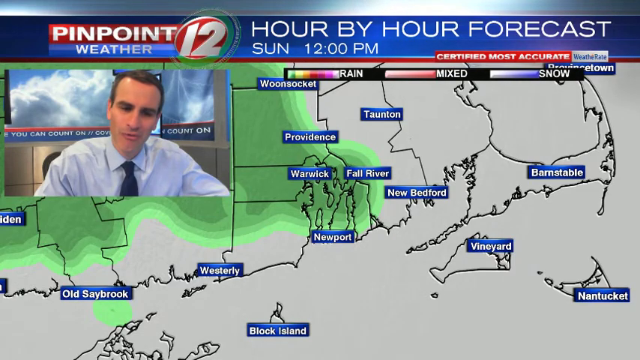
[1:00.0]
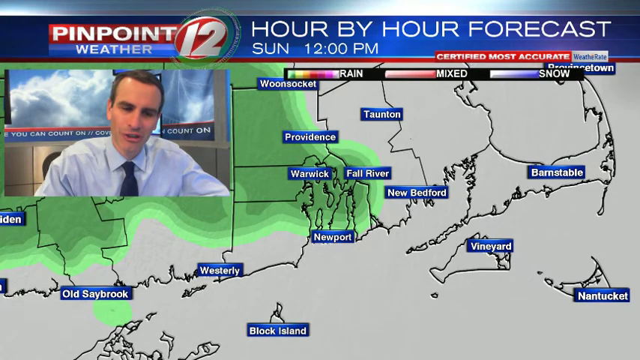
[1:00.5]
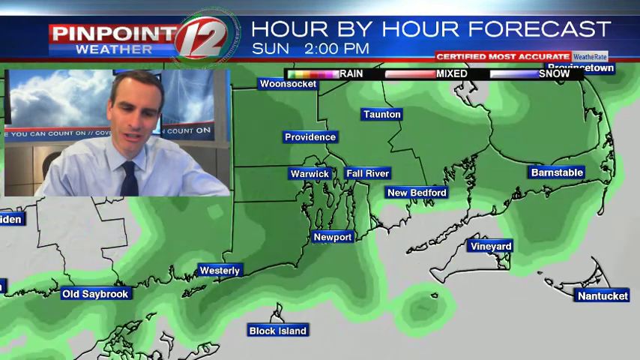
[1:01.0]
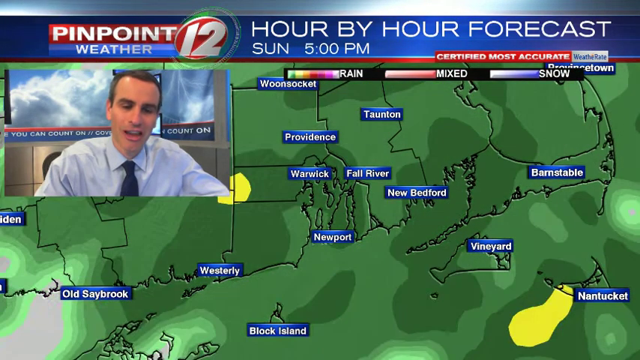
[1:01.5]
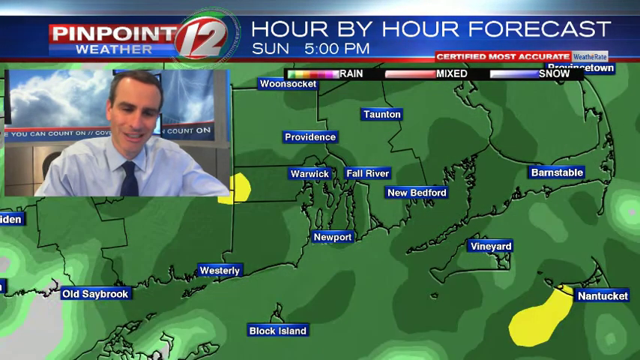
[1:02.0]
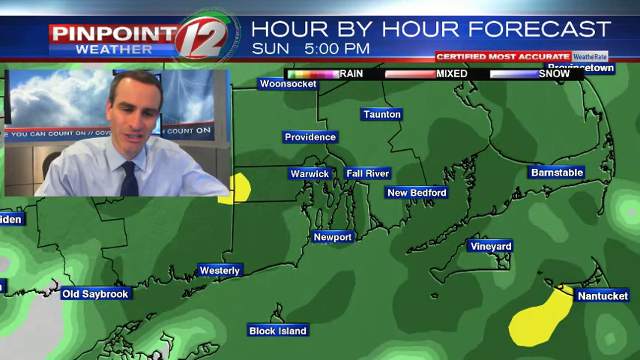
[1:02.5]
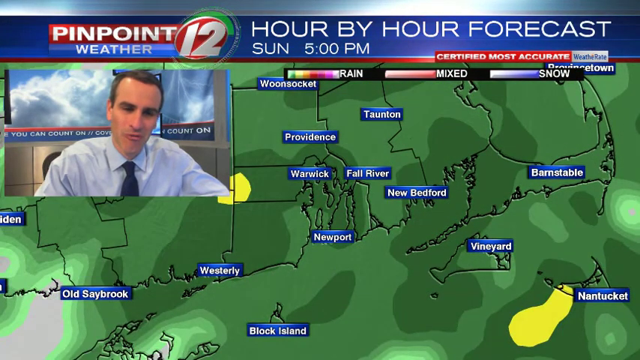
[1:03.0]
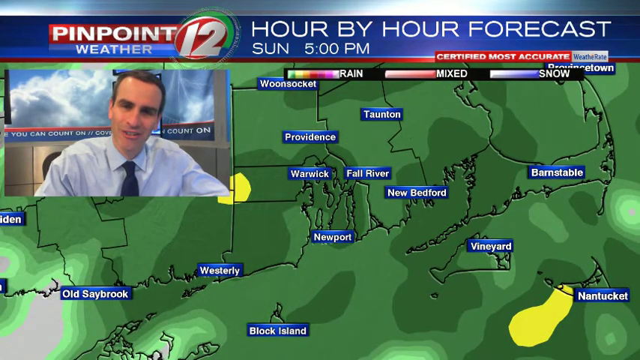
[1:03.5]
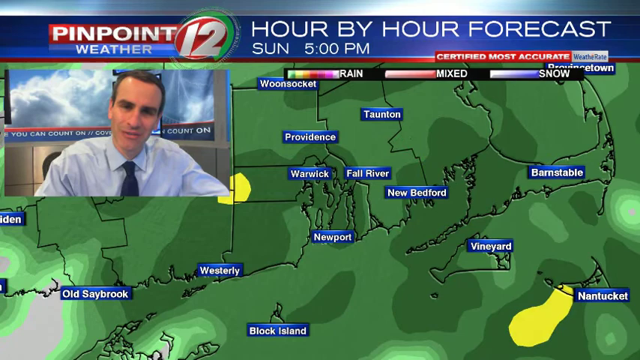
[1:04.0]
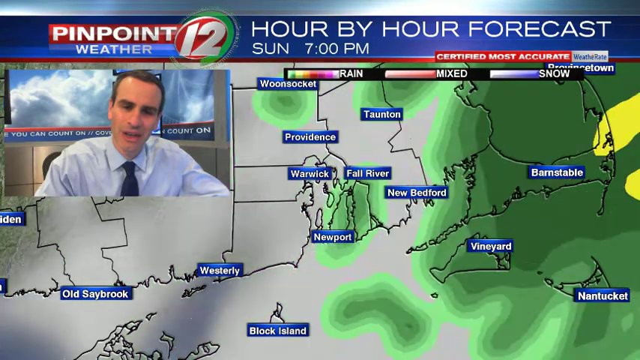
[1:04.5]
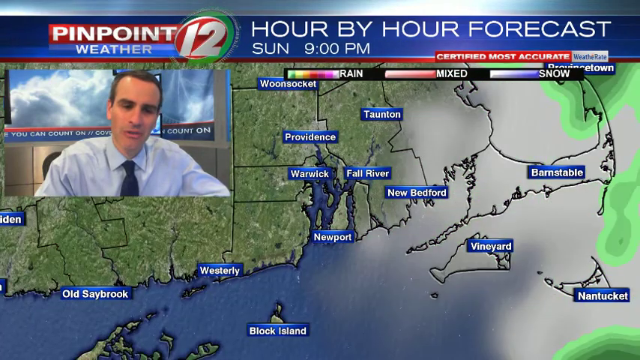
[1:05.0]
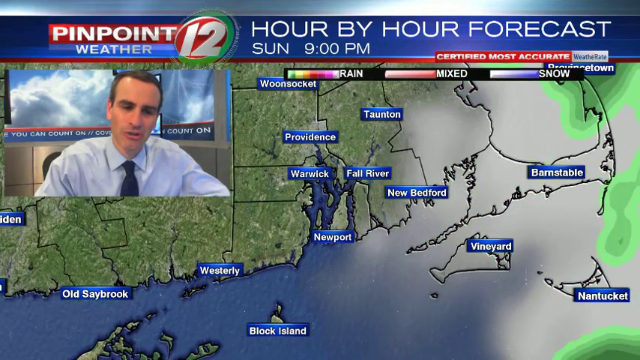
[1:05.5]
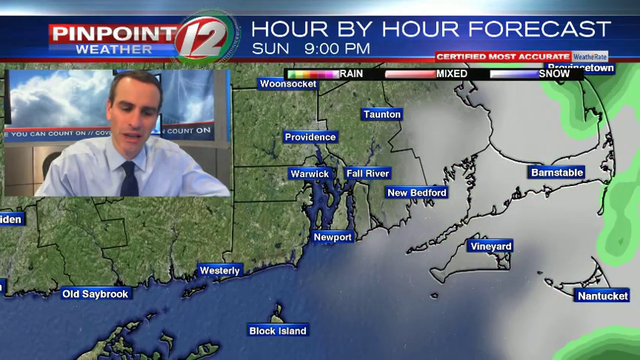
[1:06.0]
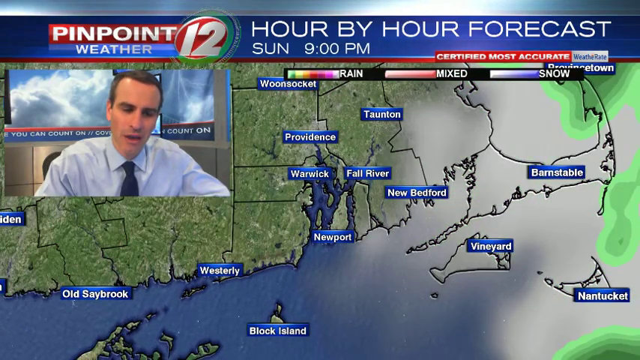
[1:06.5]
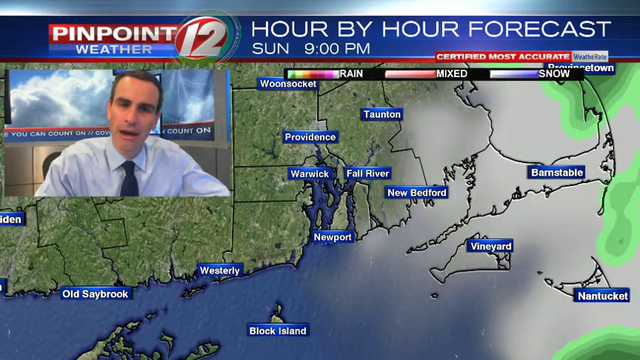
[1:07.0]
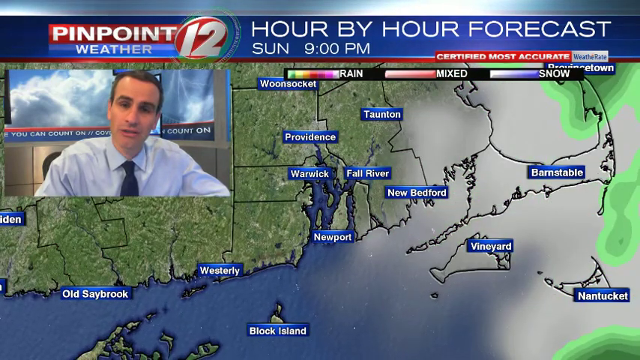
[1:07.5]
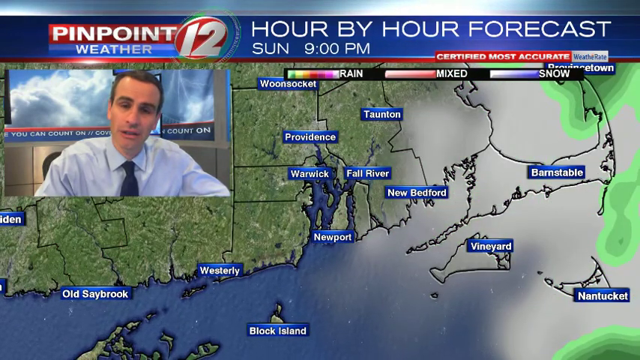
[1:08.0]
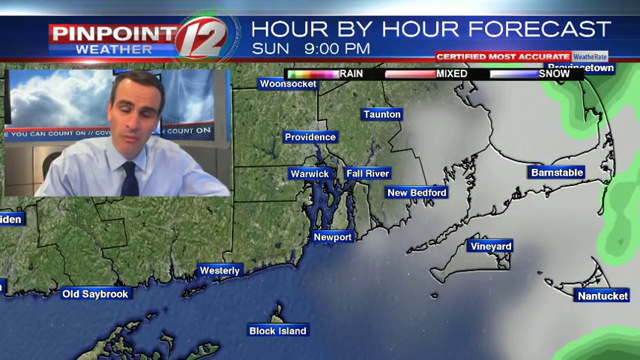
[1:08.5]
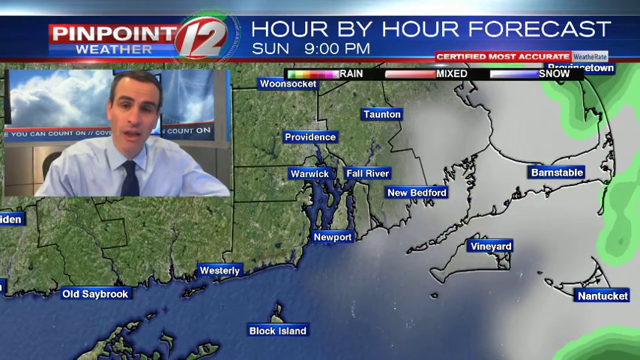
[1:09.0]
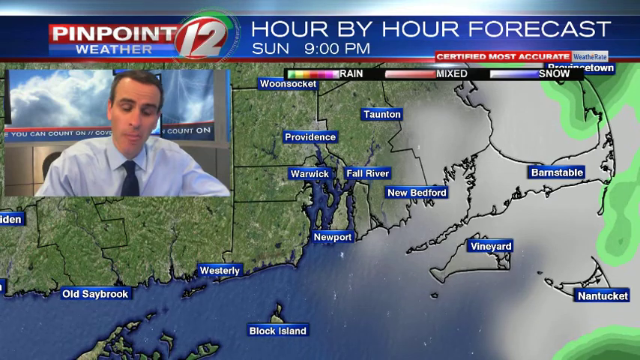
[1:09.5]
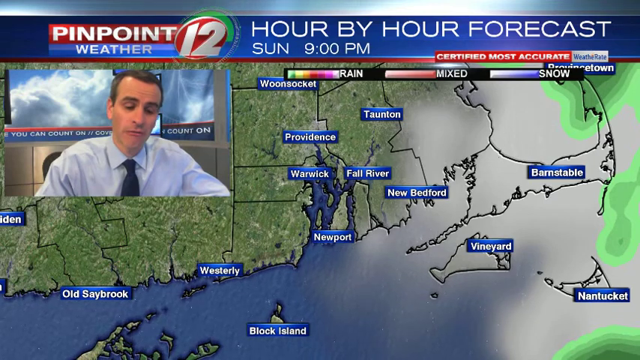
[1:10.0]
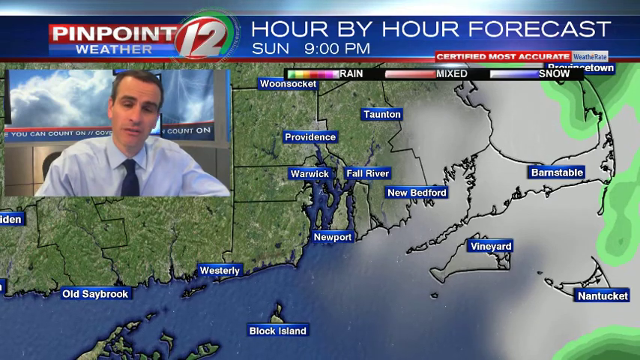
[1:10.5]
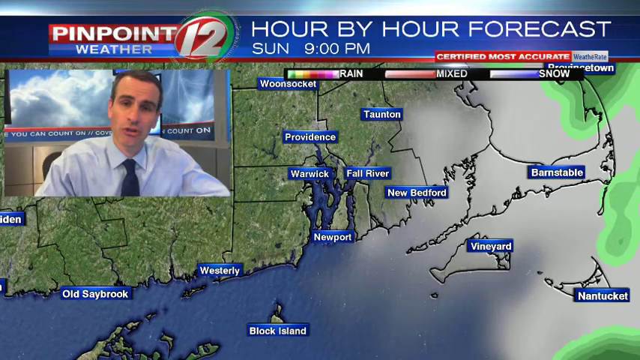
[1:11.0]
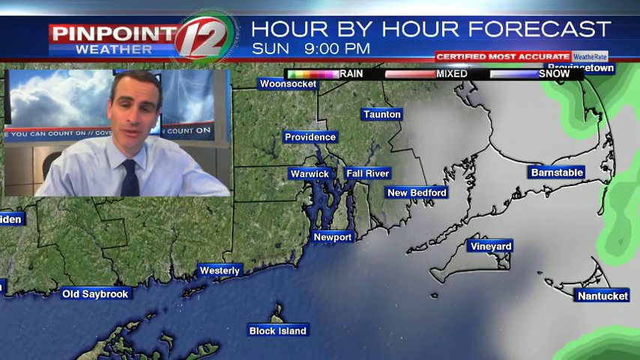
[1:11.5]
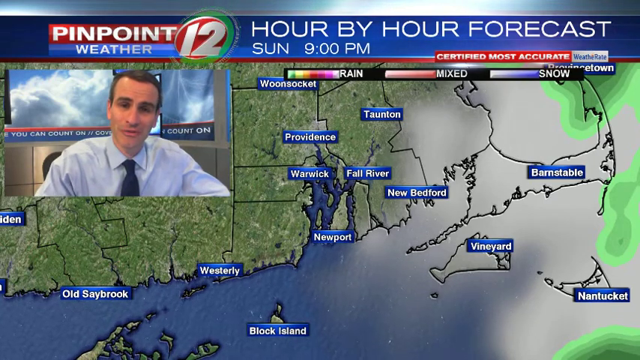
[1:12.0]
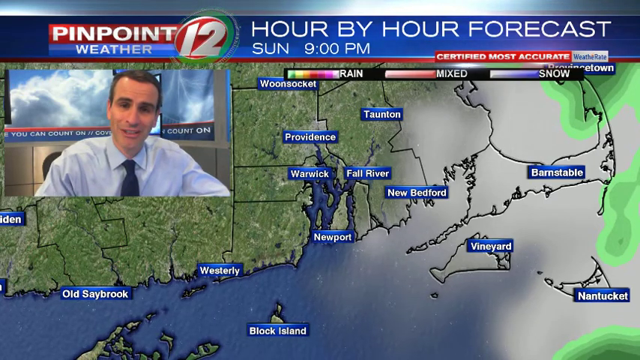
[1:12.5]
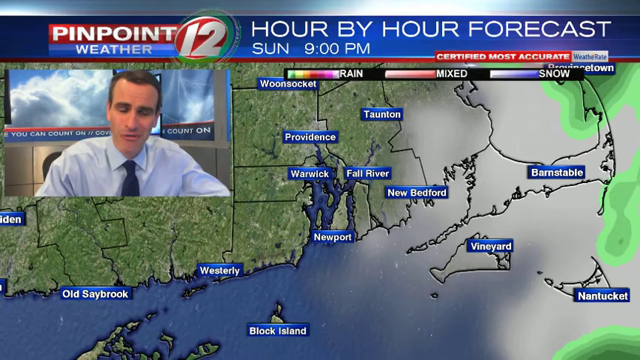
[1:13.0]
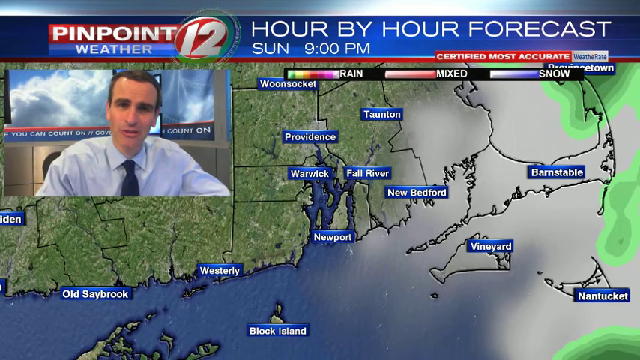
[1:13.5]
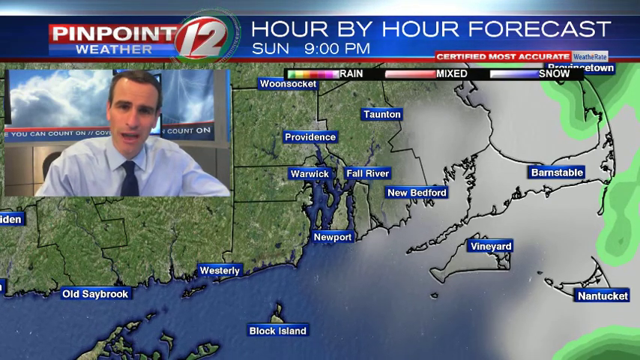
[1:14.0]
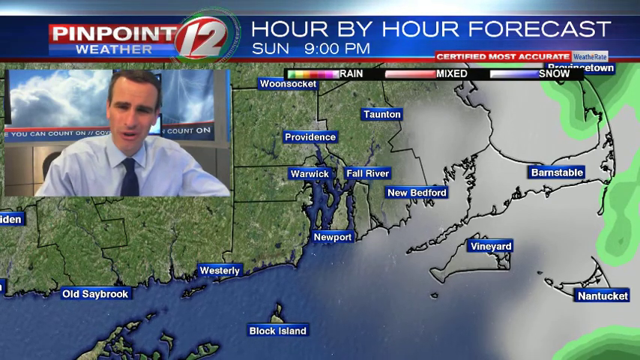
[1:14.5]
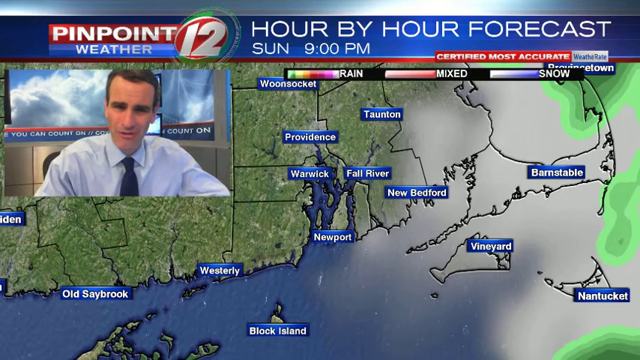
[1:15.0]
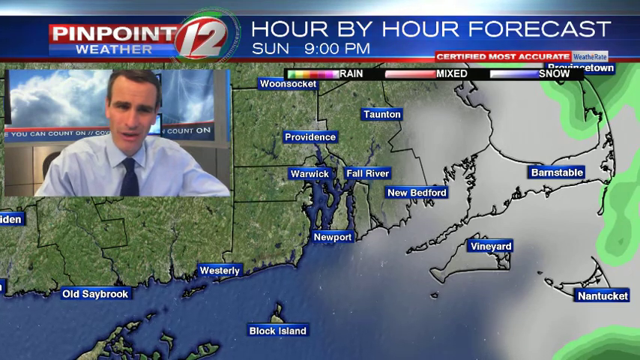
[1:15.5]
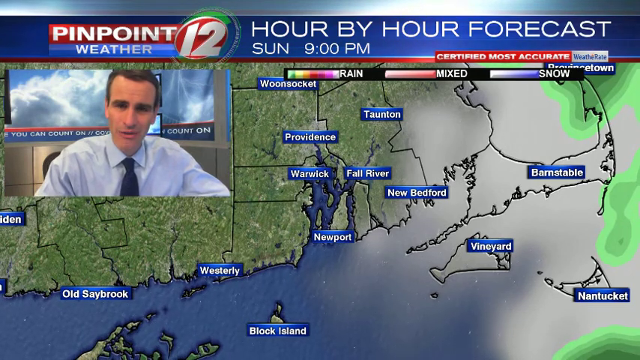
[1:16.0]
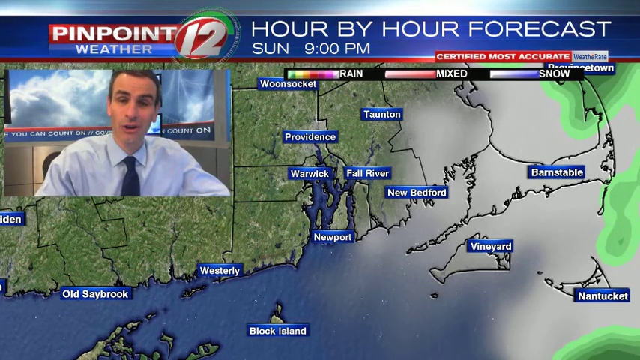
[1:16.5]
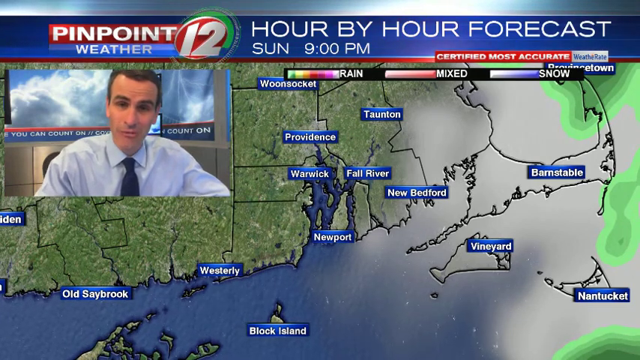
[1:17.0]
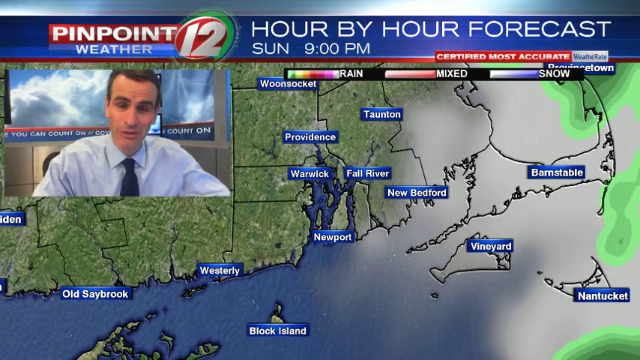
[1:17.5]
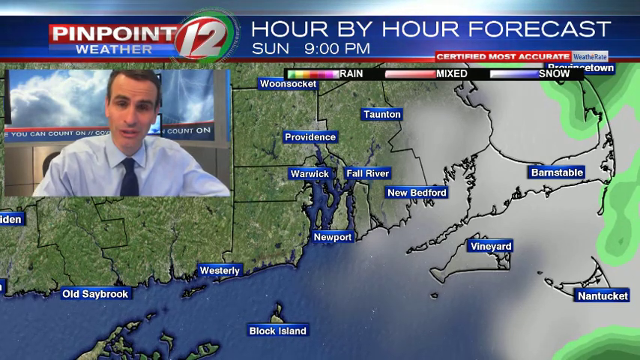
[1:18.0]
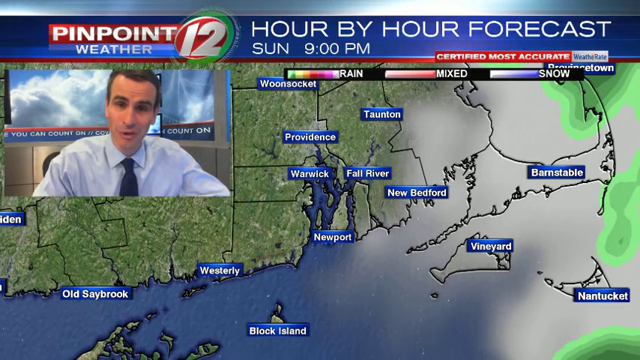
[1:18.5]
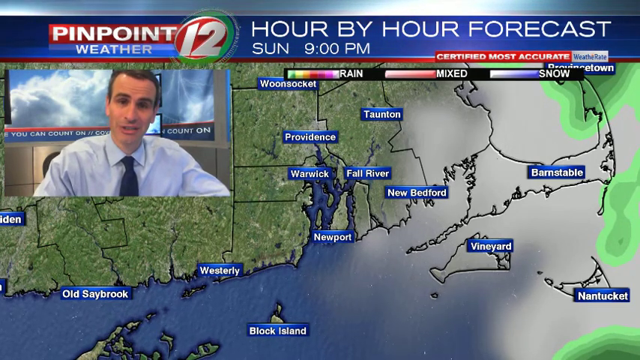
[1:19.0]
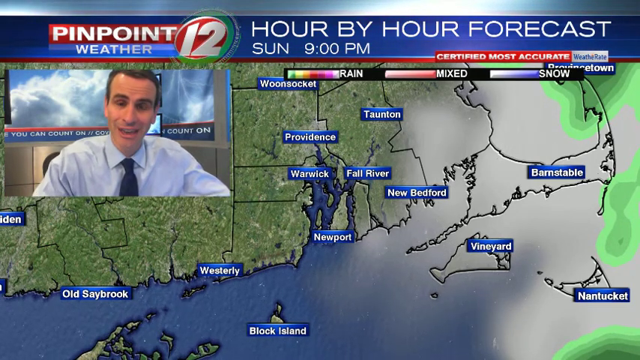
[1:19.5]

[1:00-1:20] The same man is talking while the time on top changes from Sunday 12 p.m. to Sunday 5 p.m. The weather on the map of different places in America has completely changed: everything is in green, with some dots in yellow in parts of the map. Then the time shows Sunday 9 p.m., and the map is very different, with only the far right part showing a little bit of light green. The man talks, explaining the map and comparing the weather at 5 p.m. with 9 p.m.